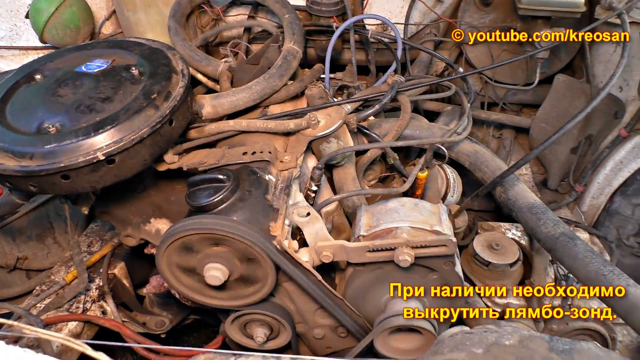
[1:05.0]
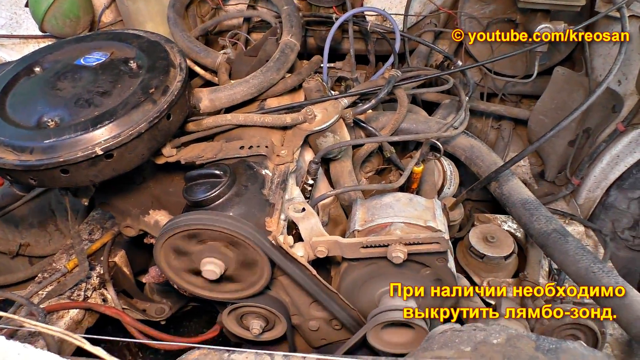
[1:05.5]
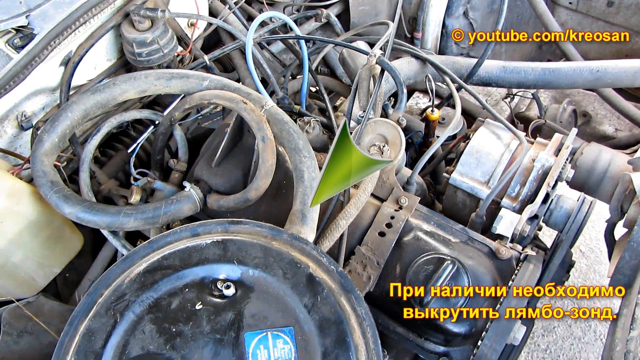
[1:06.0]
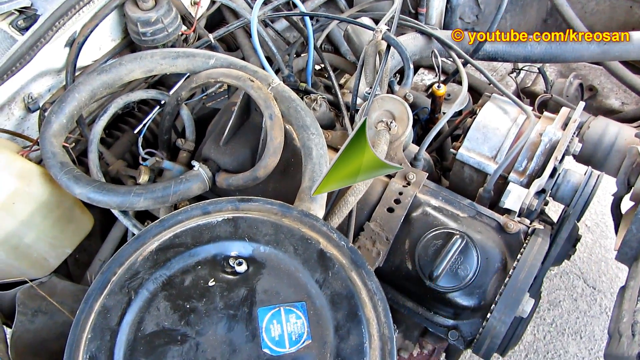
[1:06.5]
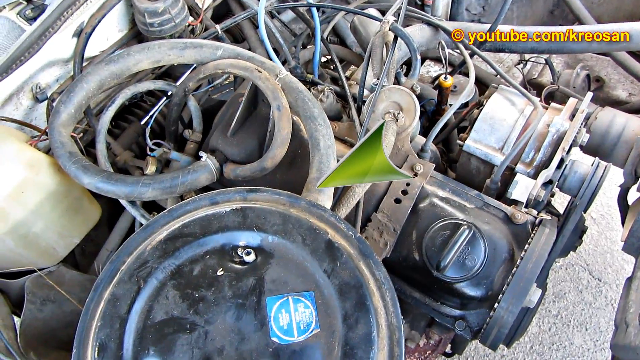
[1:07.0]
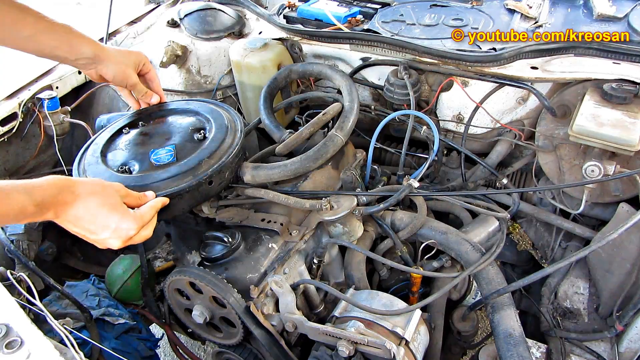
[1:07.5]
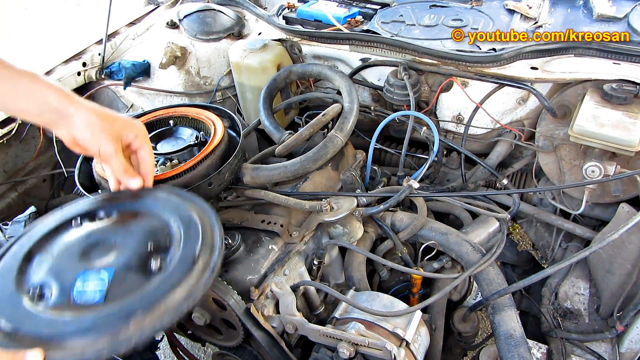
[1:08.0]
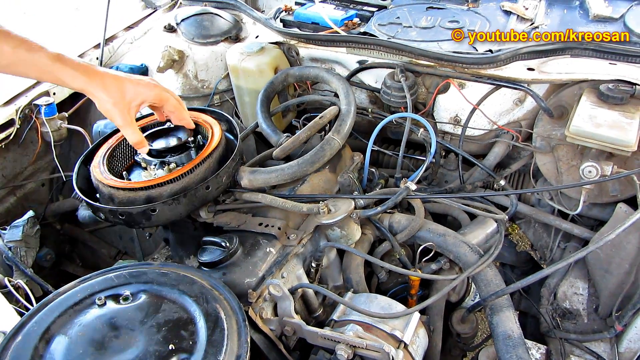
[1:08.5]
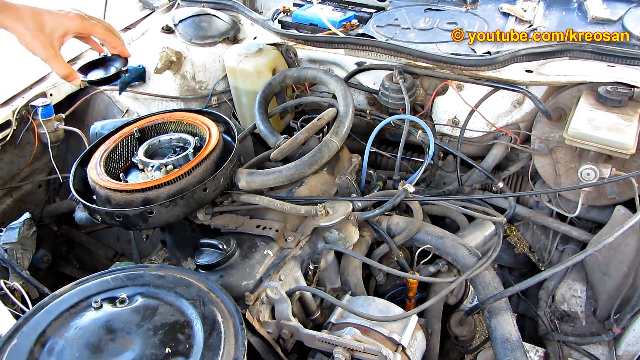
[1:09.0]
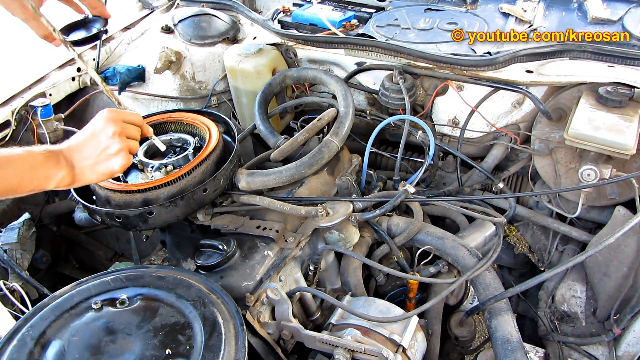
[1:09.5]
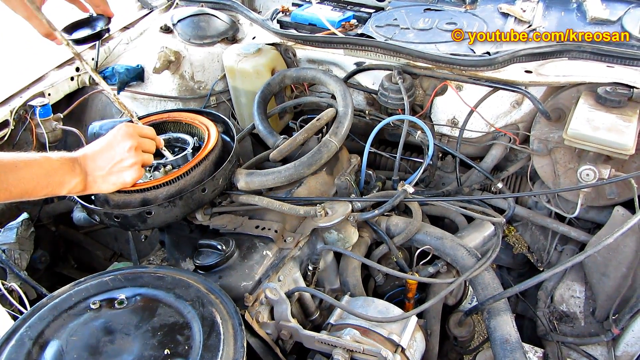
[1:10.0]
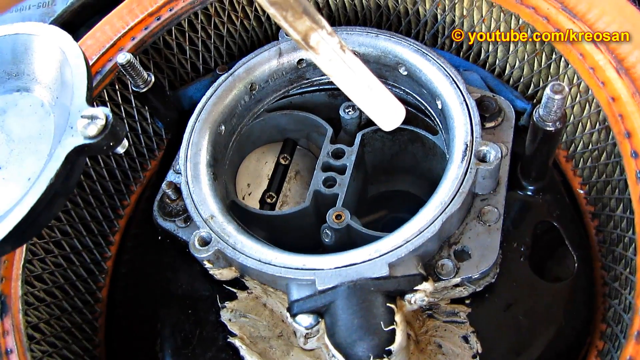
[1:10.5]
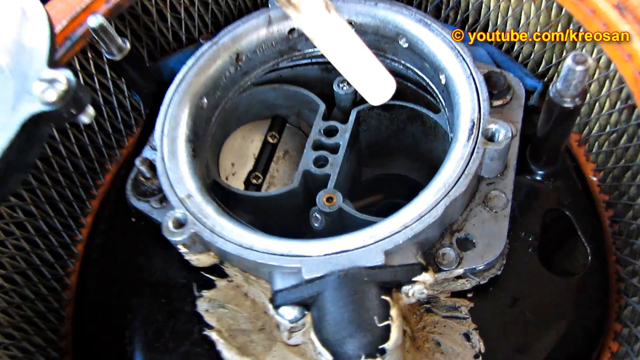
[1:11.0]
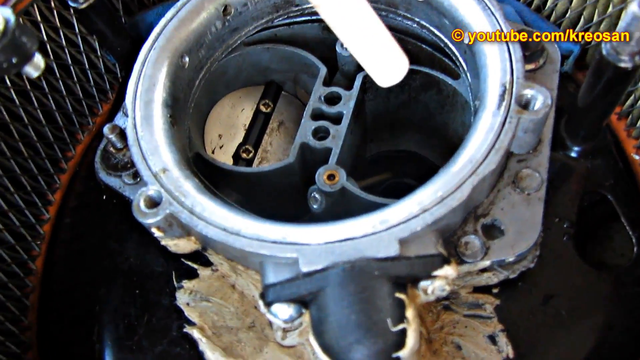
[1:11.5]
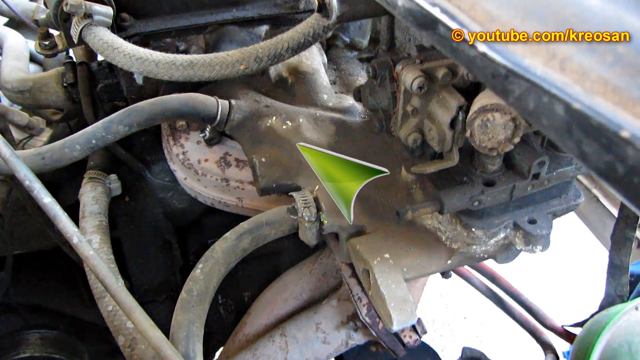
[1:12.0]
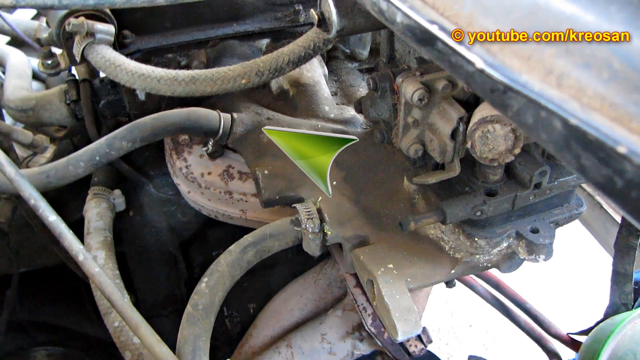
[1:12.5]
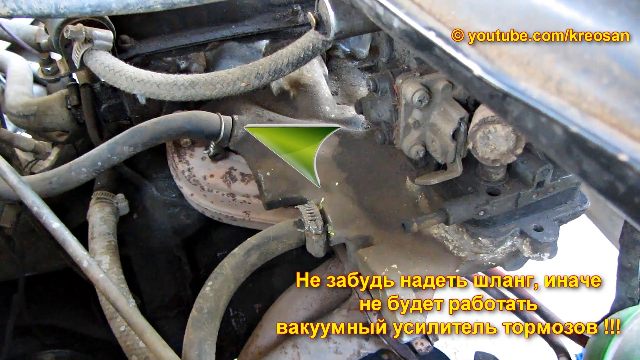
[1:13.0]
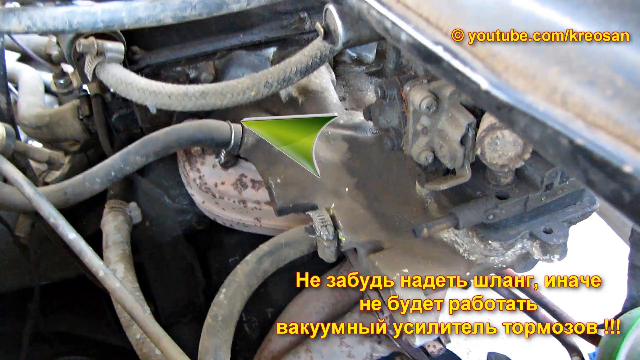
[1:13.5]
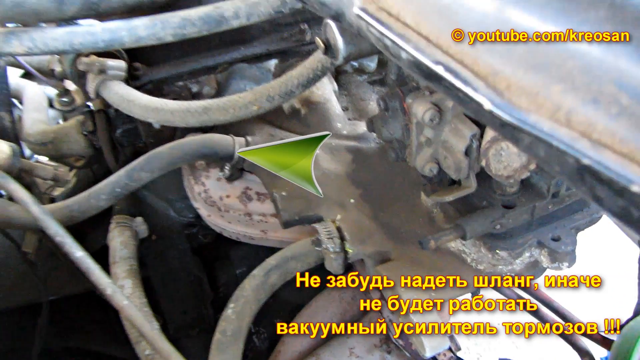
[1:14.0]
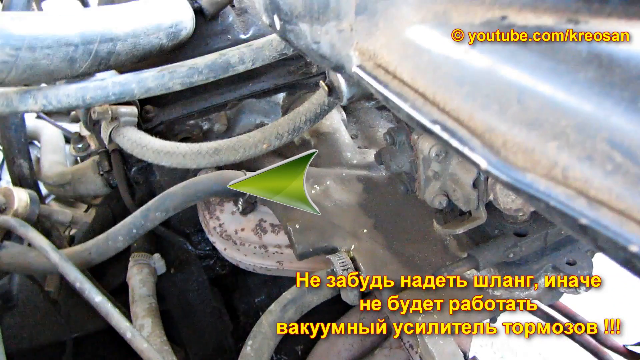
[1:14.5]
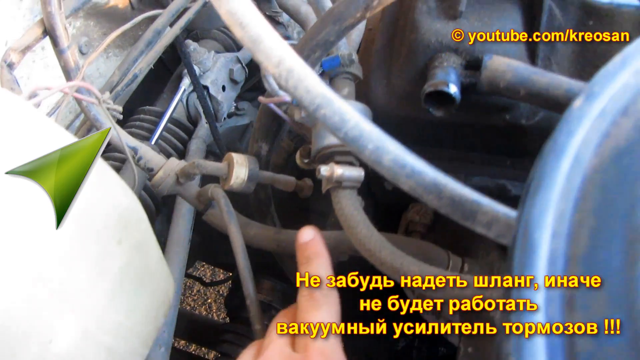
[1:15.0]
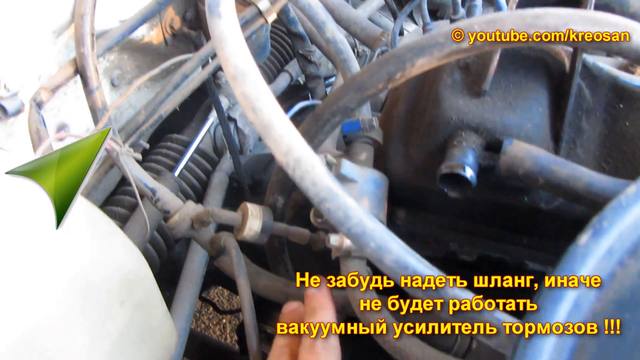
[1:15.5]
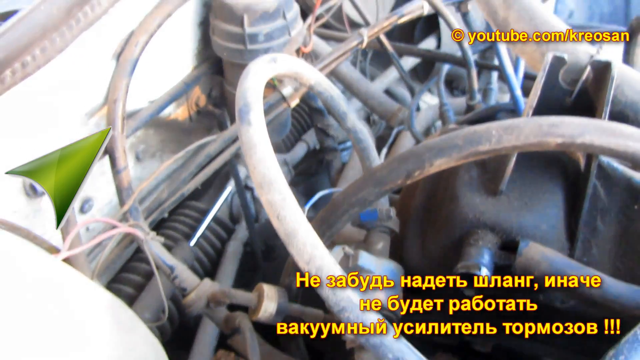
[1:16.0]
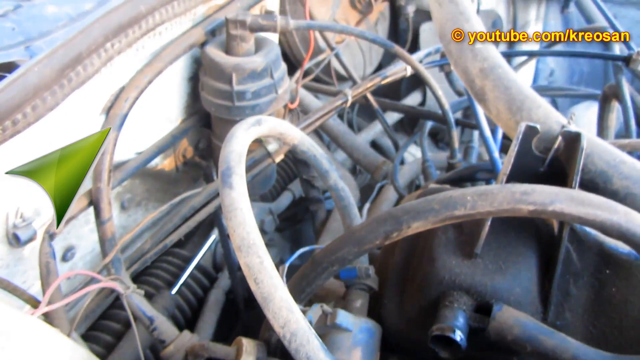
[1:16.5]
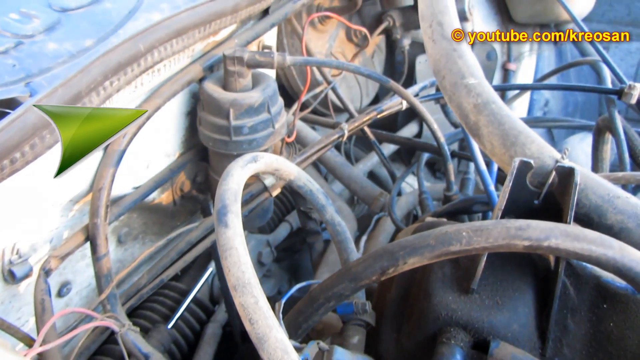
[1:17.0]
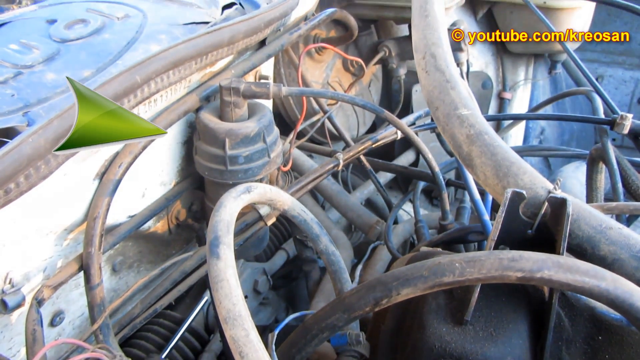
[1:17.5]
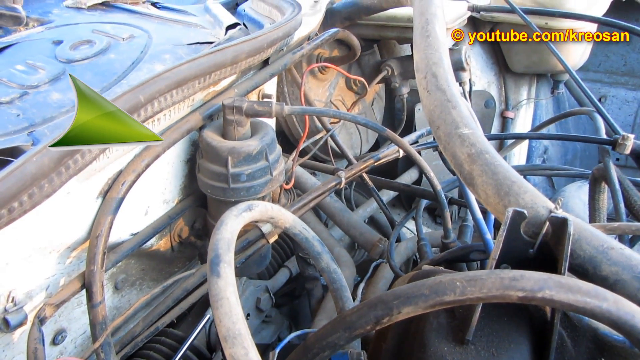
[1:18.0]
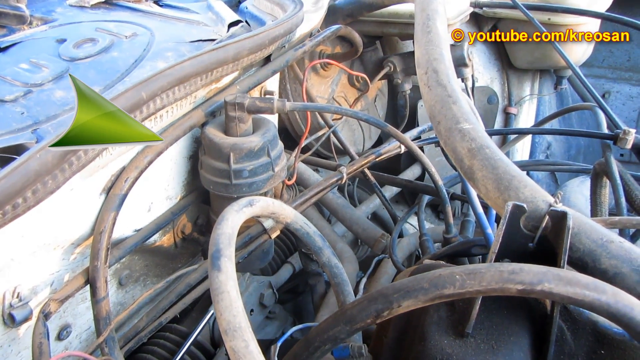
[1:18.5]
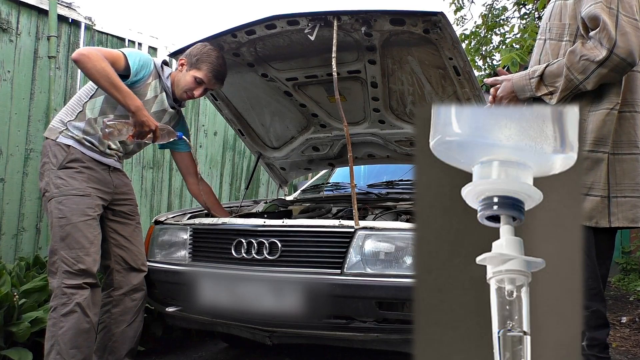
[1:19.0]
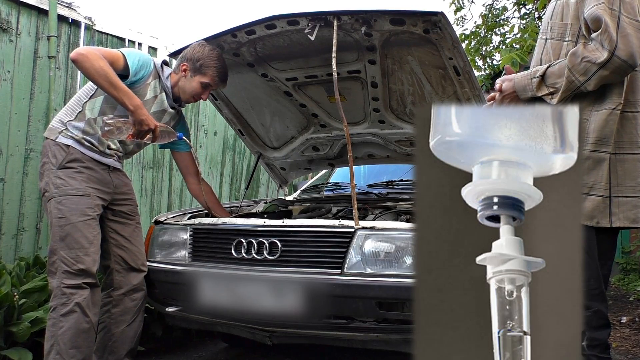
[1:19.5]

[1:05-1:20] The man pours water into a bottle and adds hydrogen peroxide, turning the hydrogen peroxide bottle upside down. He says "we'll need a bottle and a tube with a drip bag" and that the car must be started to heat up the engine. The stick is shown placed between the driver's seat and the gas pedal to keep the engine running. He takes off the cap of the oil pan. A green arrow points at various things in the engine and at tubes running through it, showing the places the mixture will go in and travel through as he gets ready to apply some type of mixture into the engine. He says it can be connected to the vacuum pipe that is connected to the manifold.